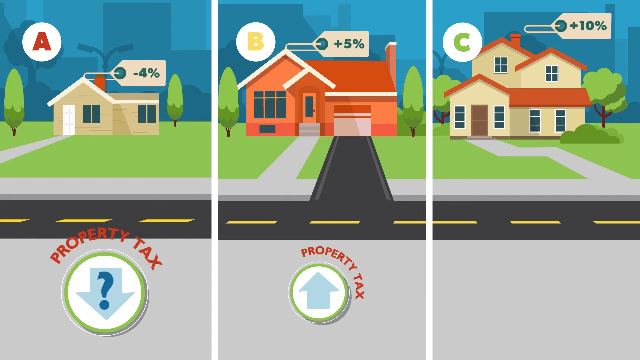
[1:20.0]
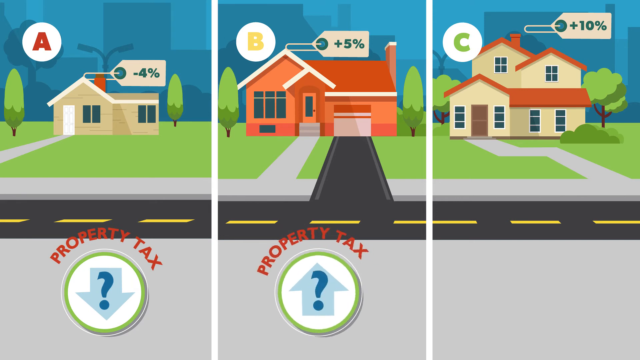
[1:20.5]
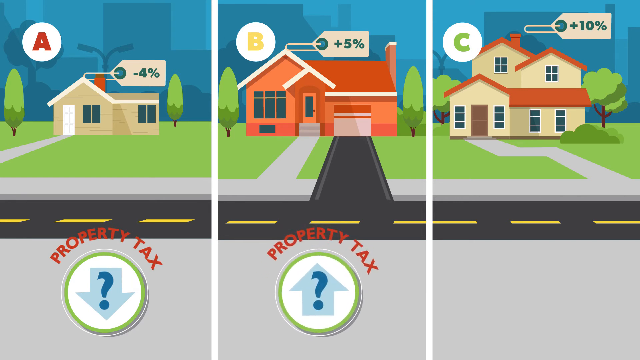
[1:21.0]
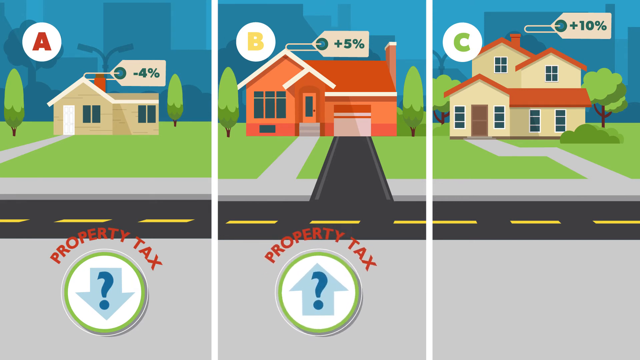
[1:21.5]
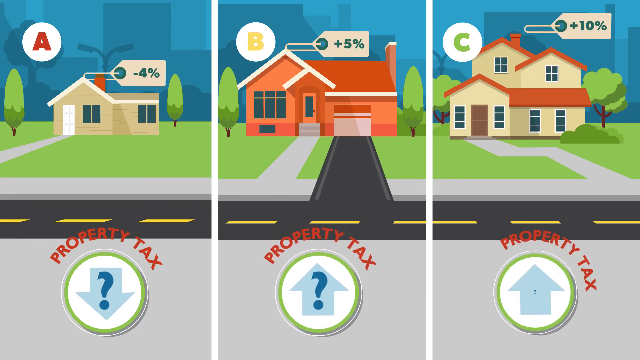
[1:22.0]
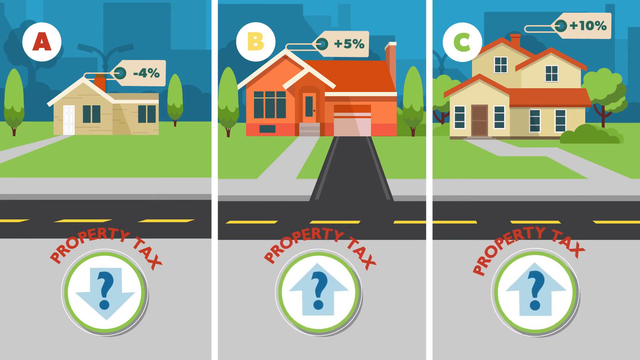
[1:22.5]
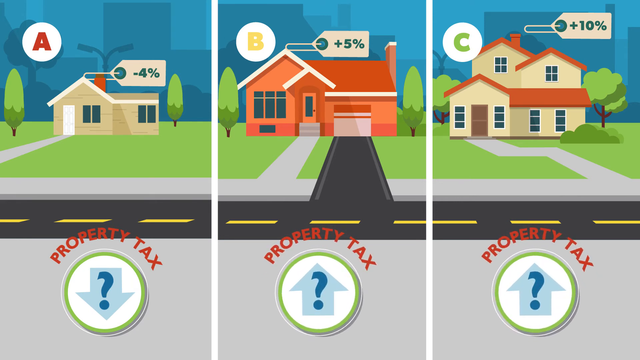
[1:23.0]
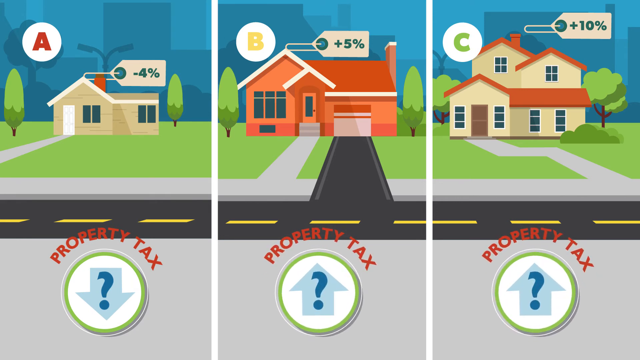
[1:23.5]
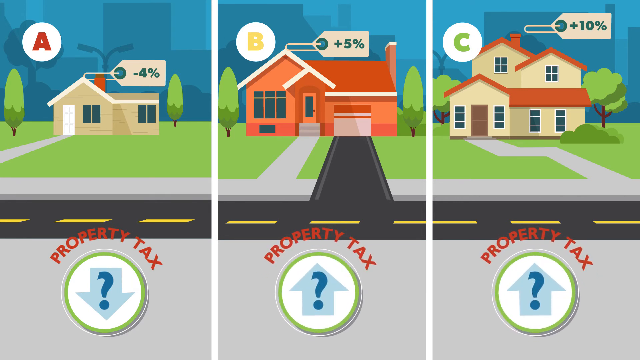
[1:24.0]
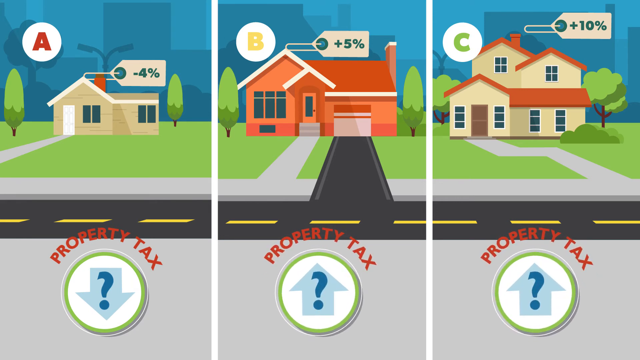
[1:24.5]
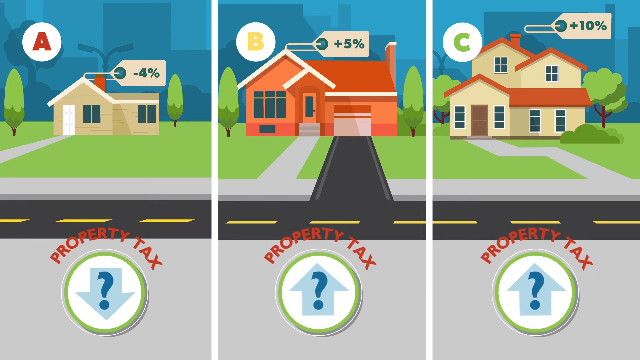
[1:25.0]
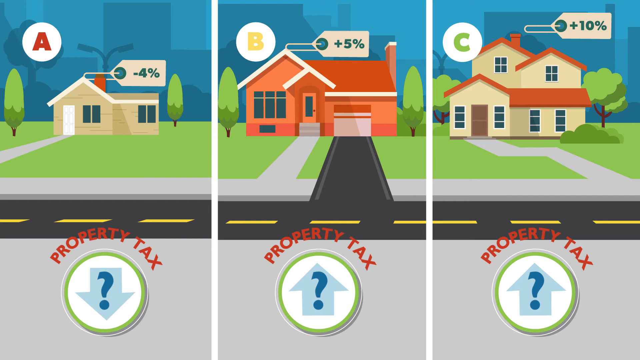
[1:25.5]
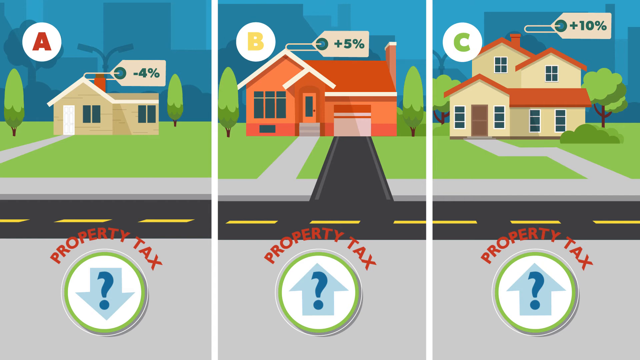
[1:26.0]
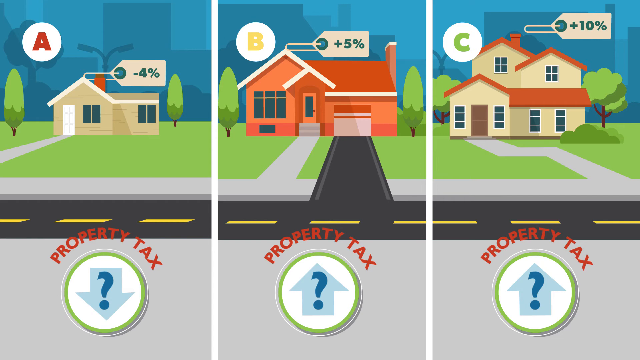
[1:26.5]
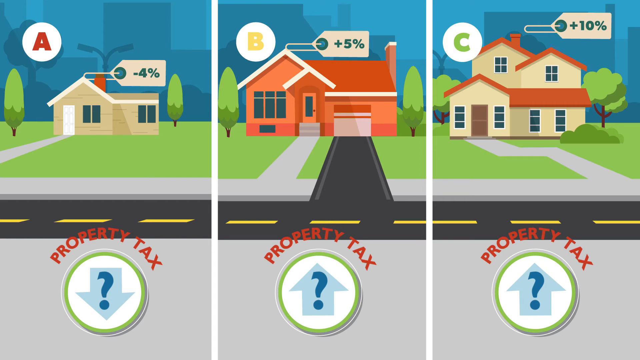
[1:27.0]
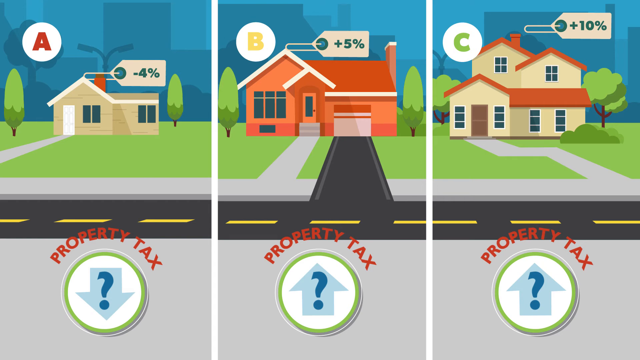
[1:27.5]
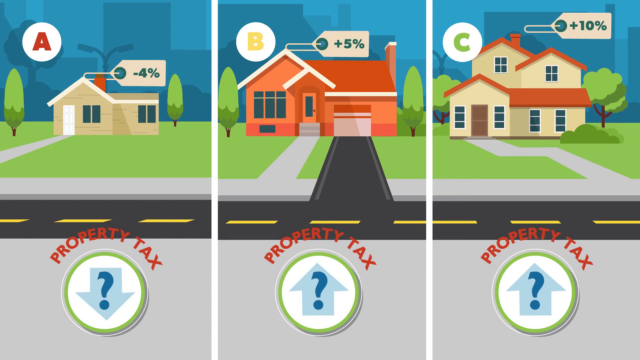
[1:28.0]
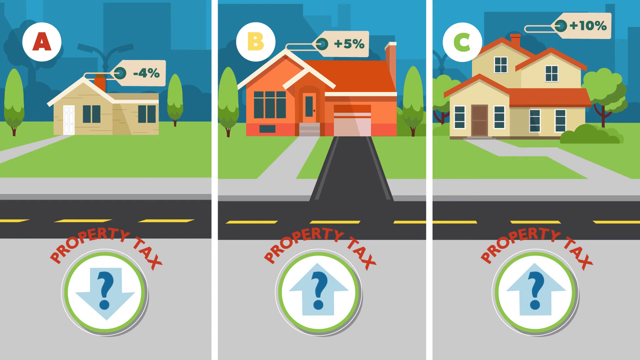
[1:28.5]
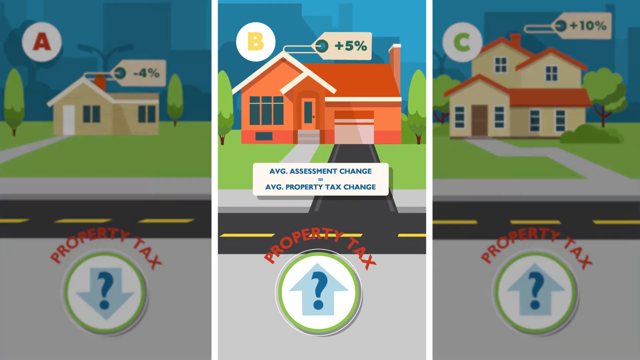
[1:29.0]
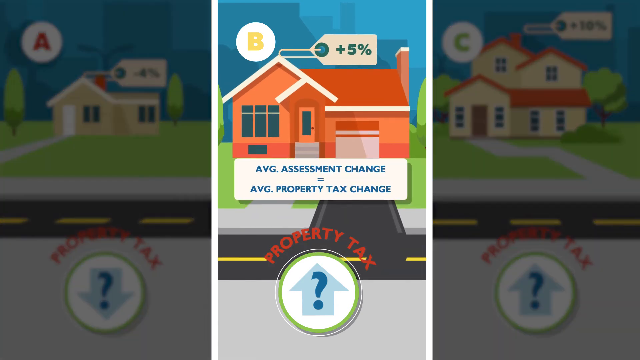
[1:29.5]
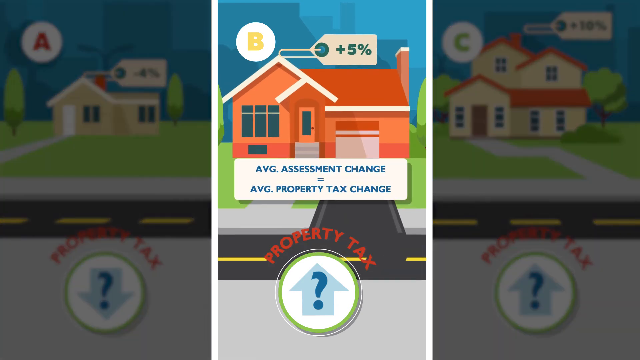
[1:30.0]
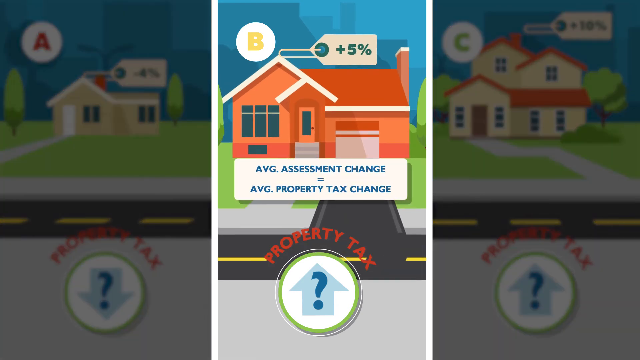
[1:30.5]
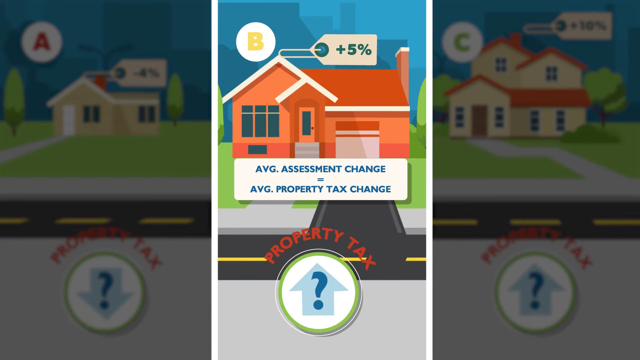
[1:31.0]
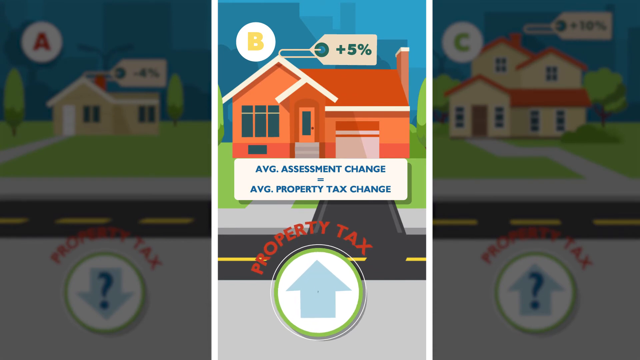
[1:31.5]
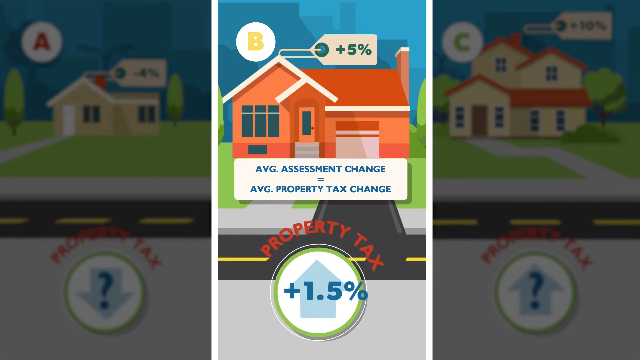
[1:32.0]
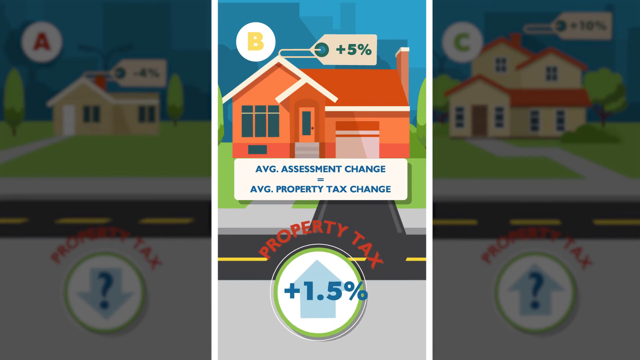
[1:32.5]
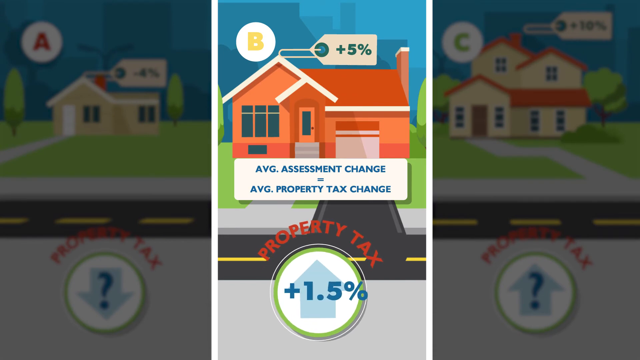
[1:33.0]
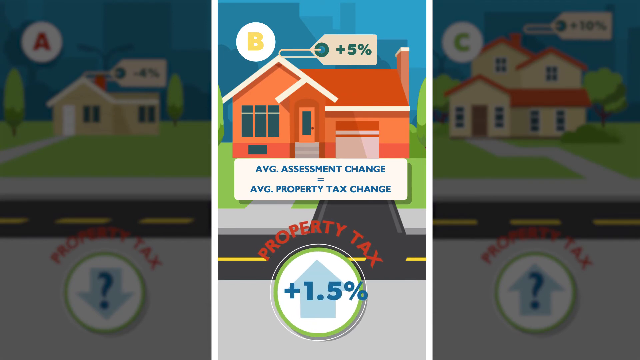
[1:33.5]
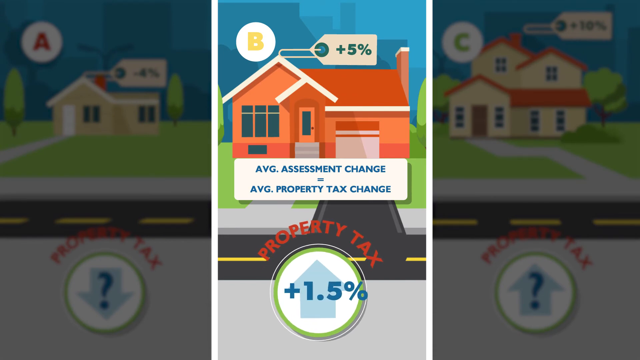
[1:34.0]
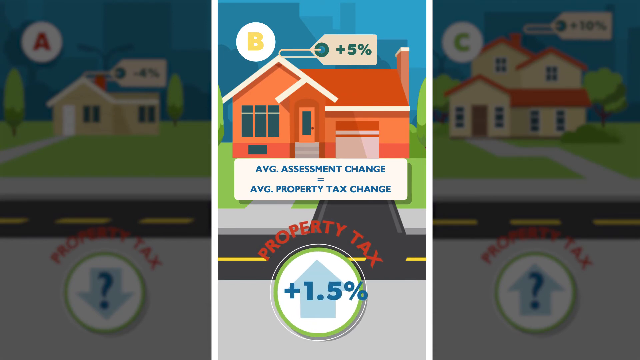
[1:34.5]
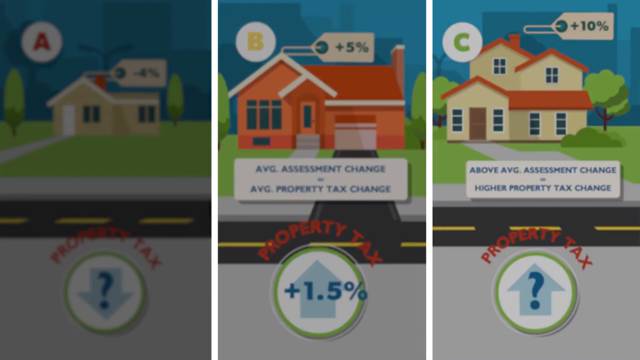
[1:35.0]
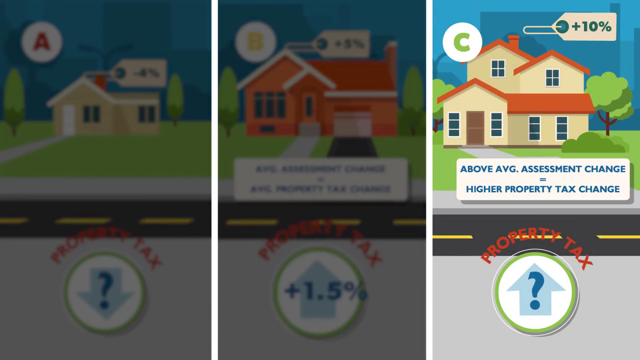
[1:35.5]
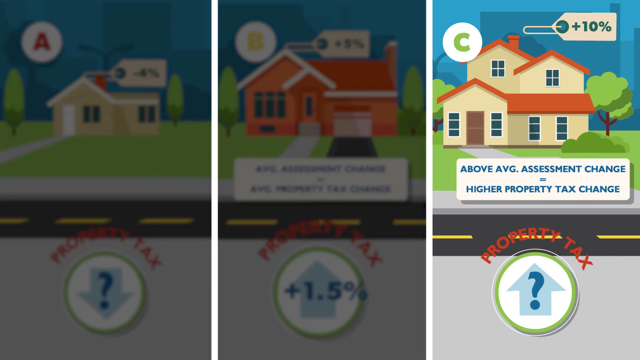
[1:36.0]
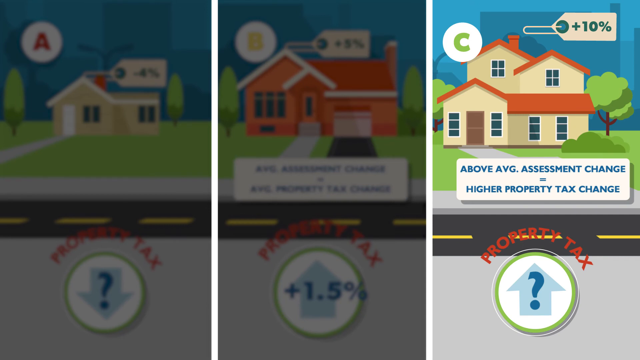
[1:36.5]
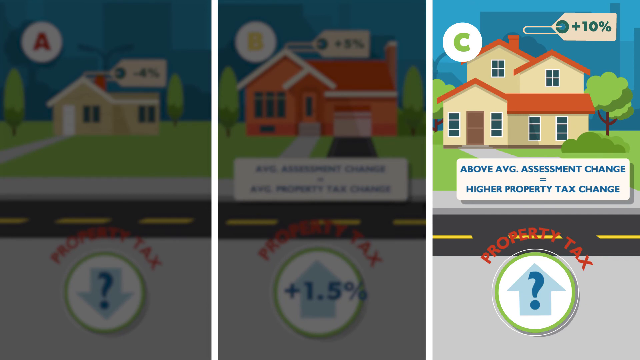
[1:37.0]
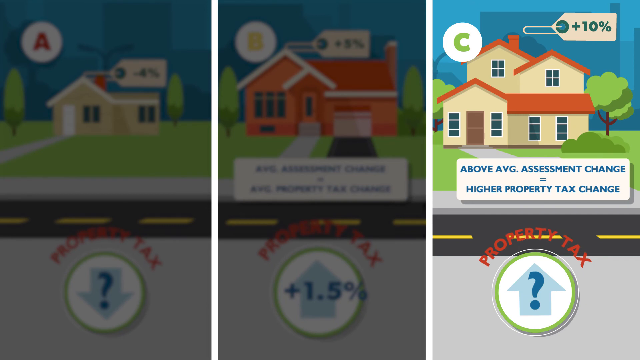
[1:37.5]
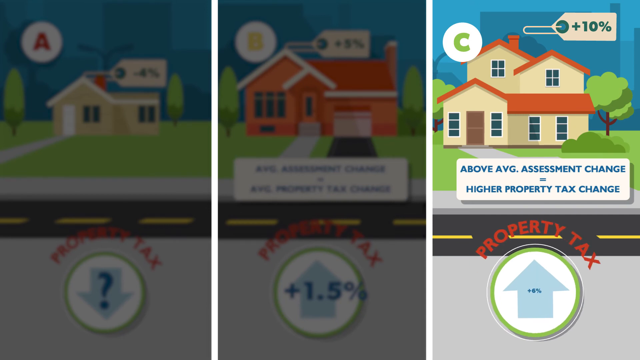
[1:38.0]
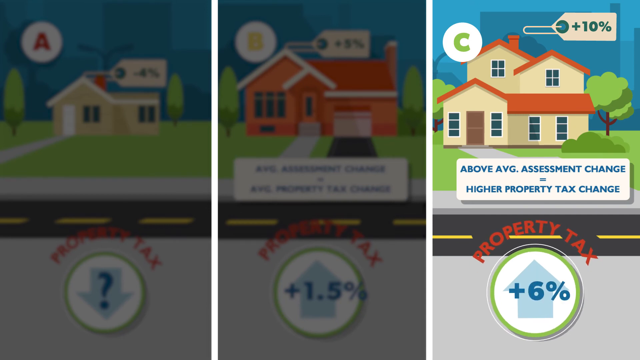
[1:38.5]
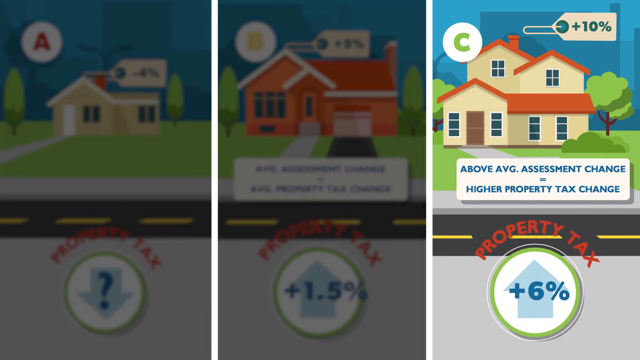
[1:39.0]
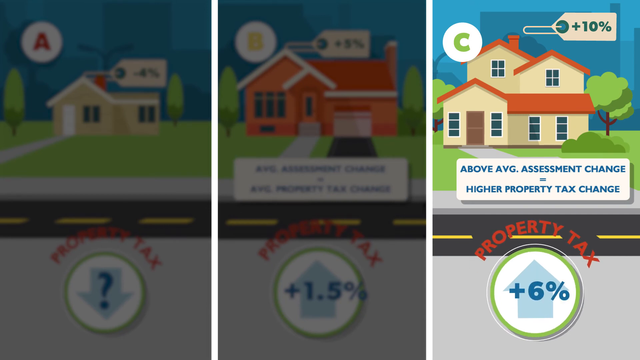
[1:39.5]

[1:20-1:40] The presentation slide by the city of Red Deer continues, showing three houses: house A at minus 4, house B at plus 5 and house C at plus 10. It shows that the average assessment change is equal to the average percentage change, giving 1.5 percent, and another example from B with plus 10 percent. It also shows that an above-average assessment change equals a higher property tax change, so the property tax for house C is plus 6%. The overall property tax for house A is not calculated or included. The city's banner, logos and names are visible. For house A, it shows that a below-average assessment change equals a lower property tax change.